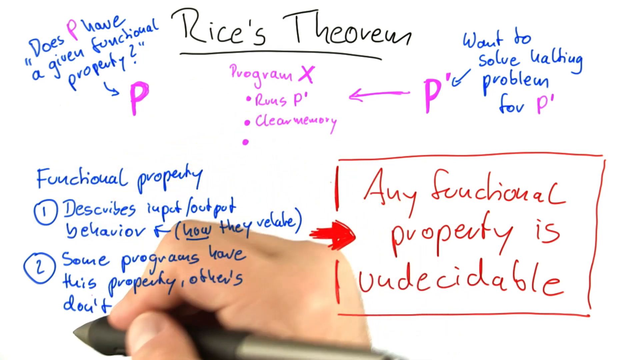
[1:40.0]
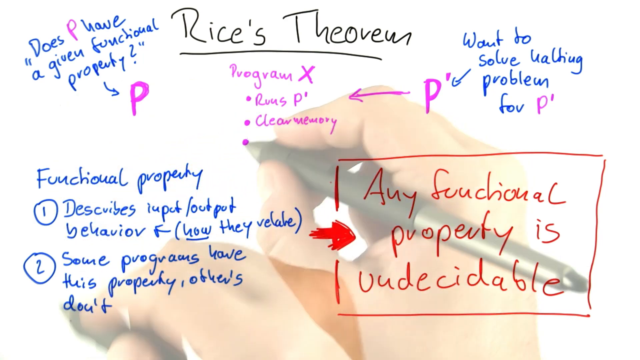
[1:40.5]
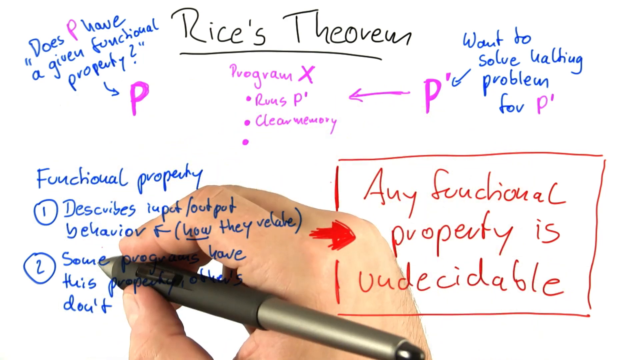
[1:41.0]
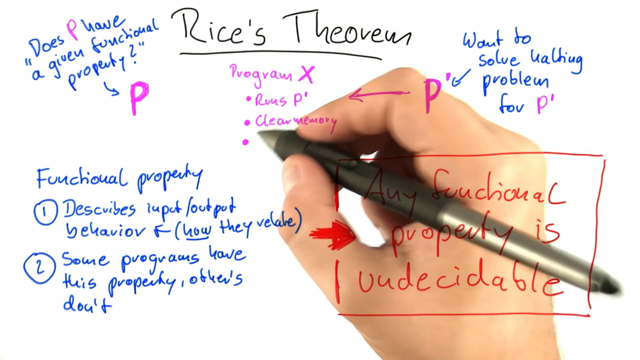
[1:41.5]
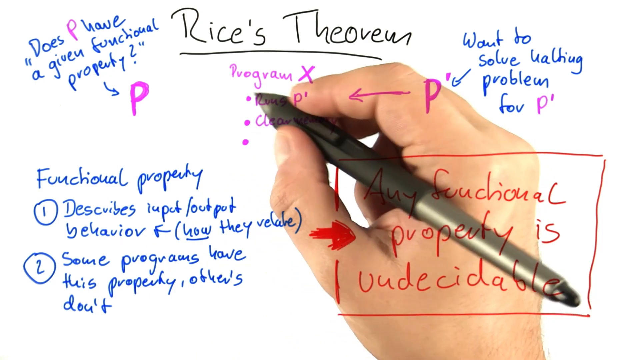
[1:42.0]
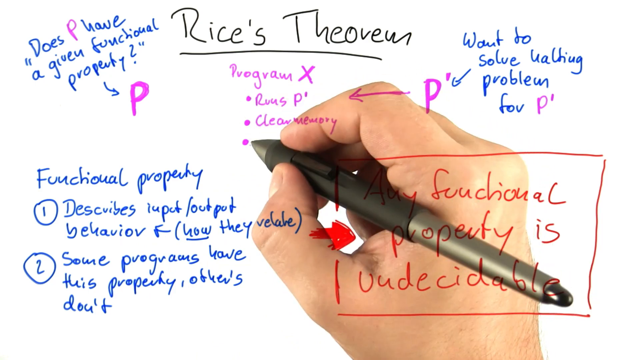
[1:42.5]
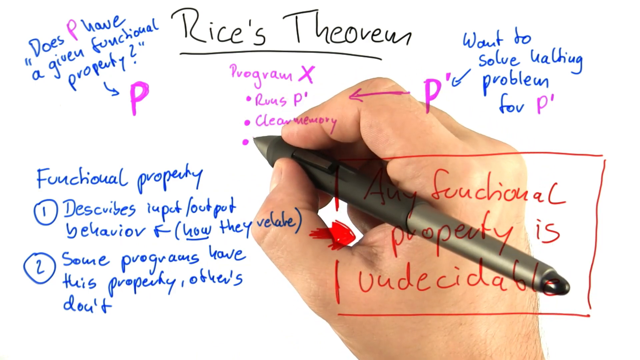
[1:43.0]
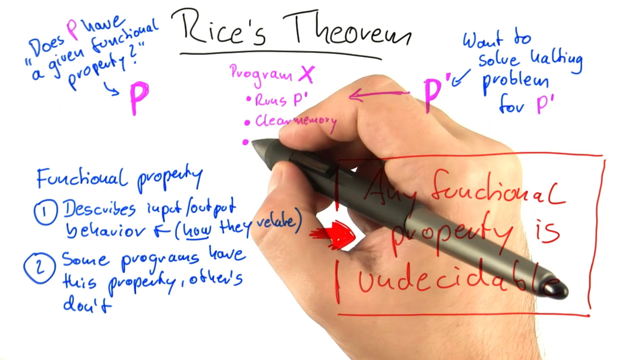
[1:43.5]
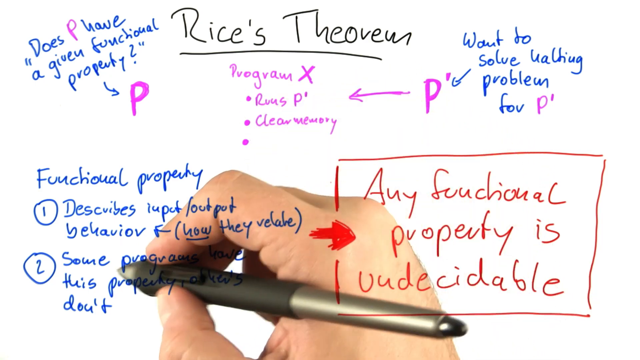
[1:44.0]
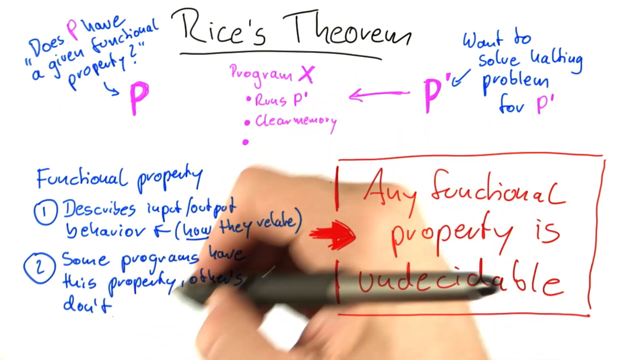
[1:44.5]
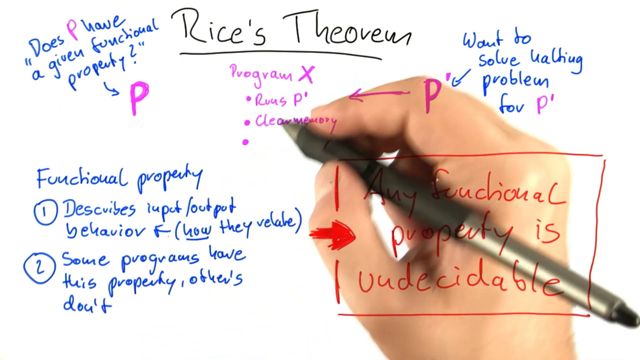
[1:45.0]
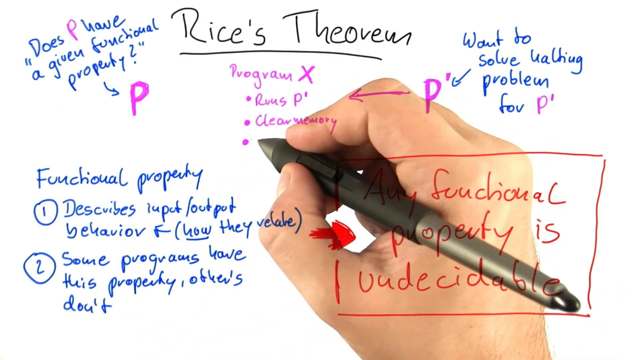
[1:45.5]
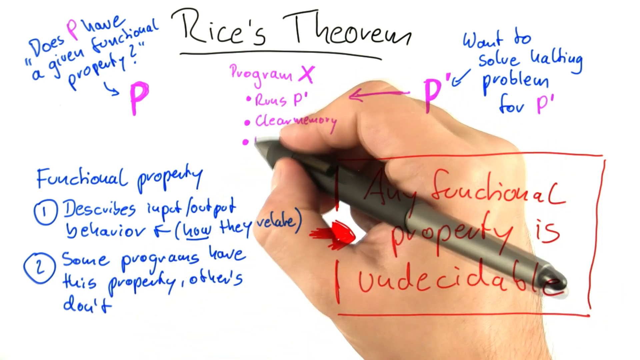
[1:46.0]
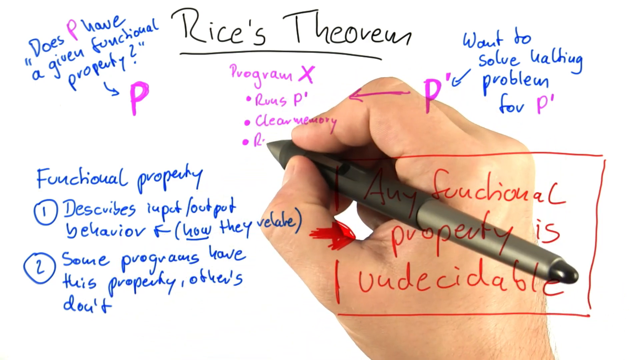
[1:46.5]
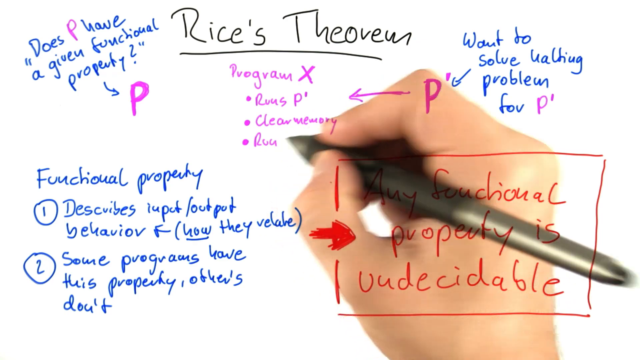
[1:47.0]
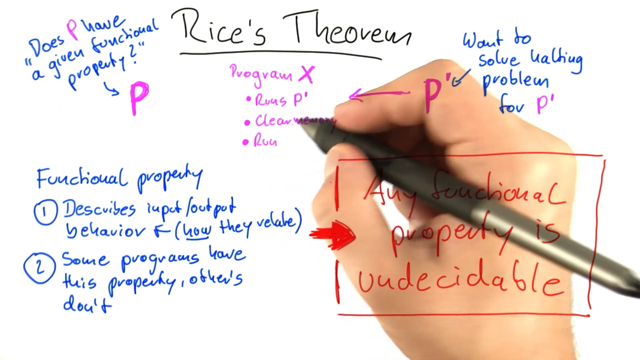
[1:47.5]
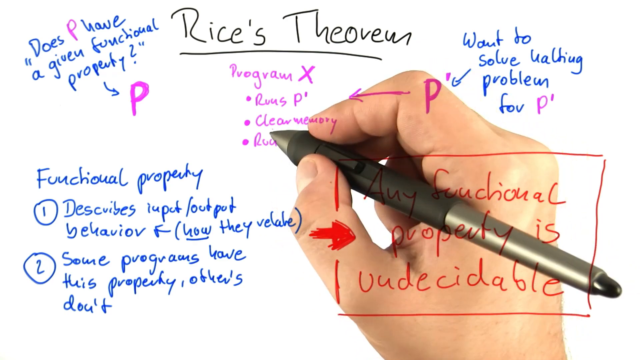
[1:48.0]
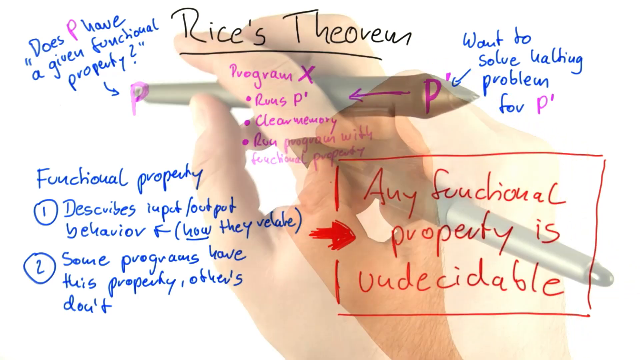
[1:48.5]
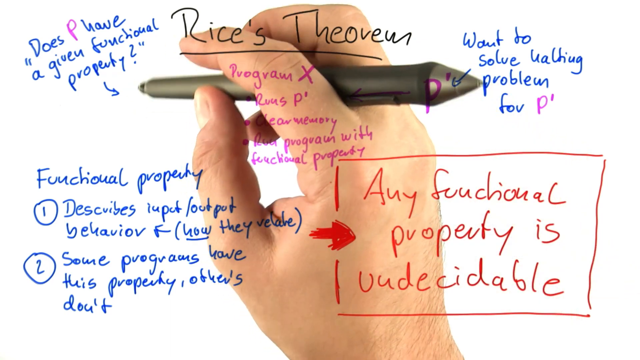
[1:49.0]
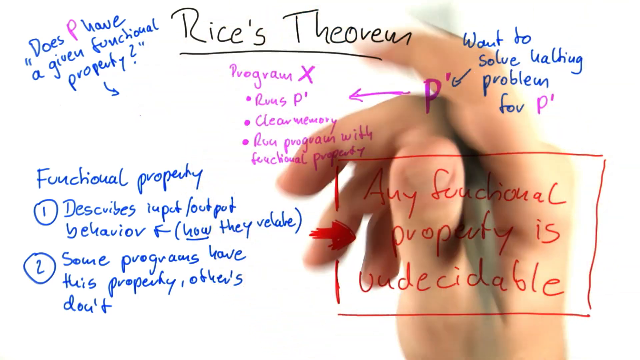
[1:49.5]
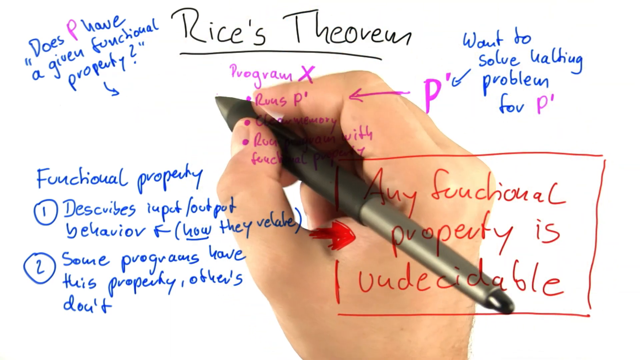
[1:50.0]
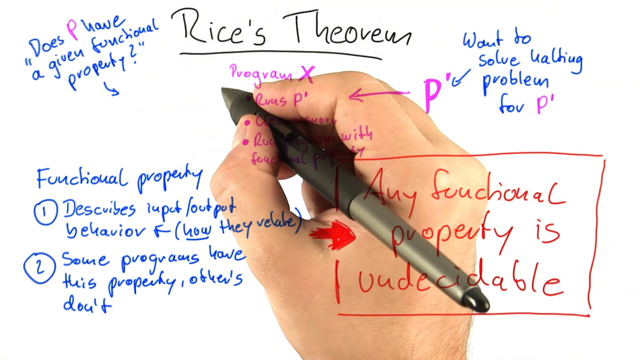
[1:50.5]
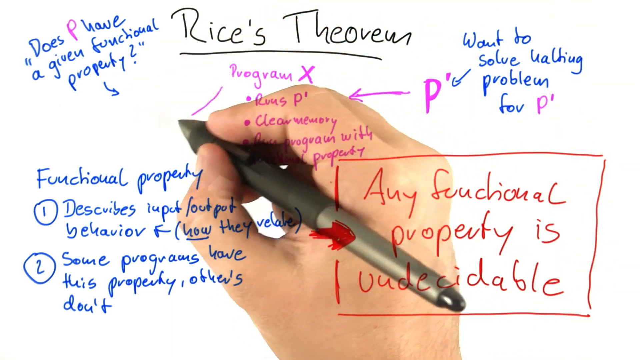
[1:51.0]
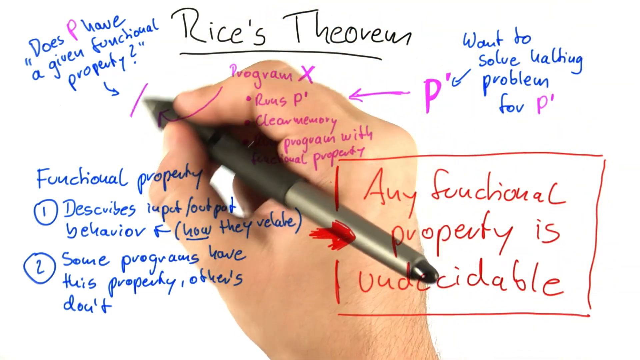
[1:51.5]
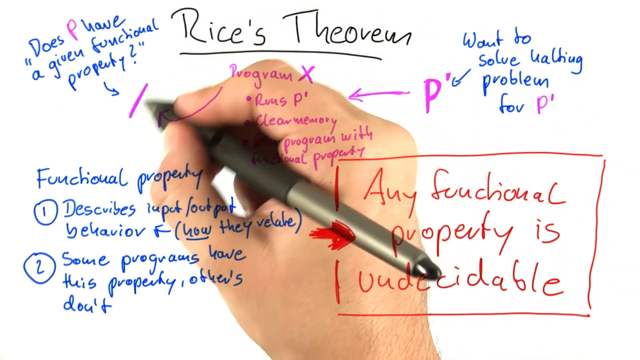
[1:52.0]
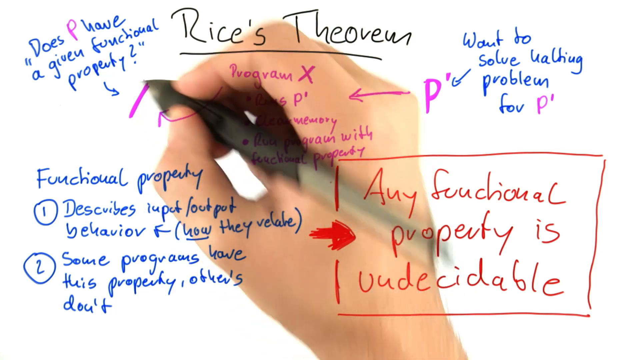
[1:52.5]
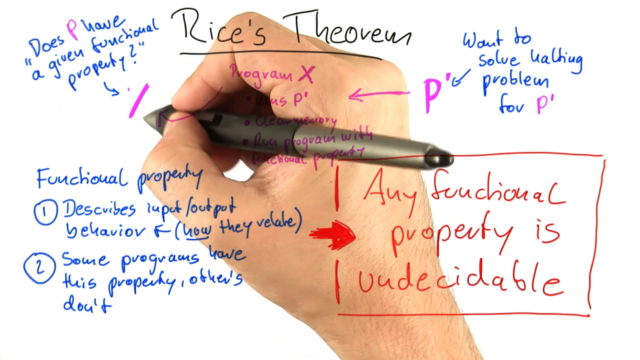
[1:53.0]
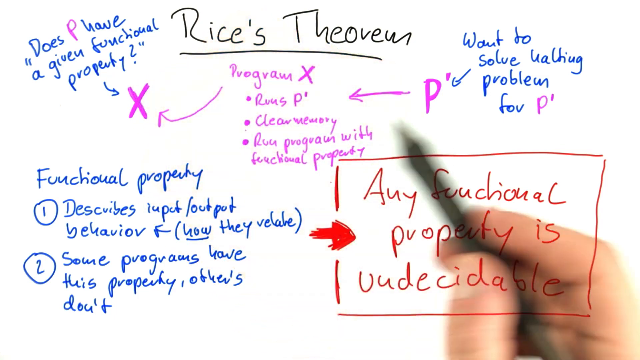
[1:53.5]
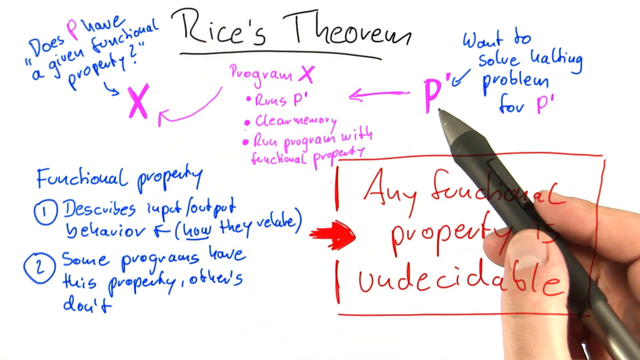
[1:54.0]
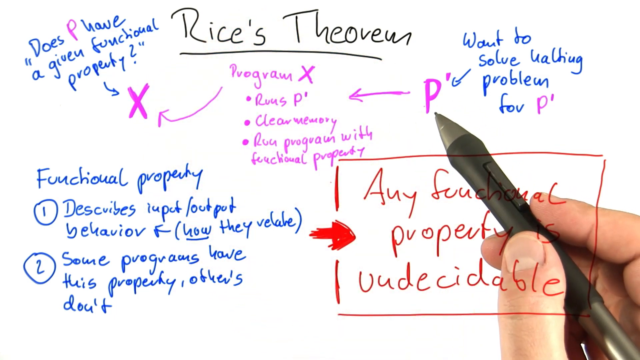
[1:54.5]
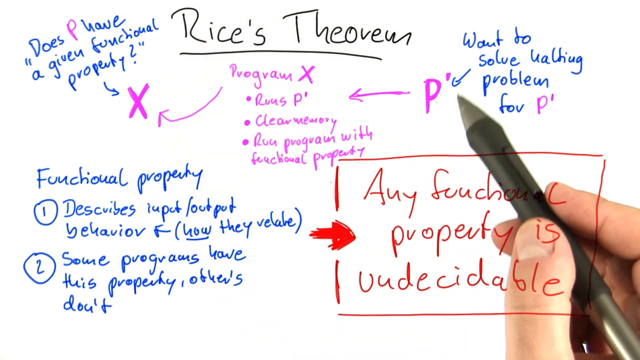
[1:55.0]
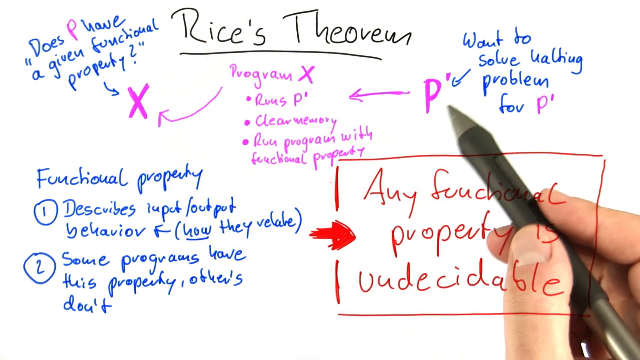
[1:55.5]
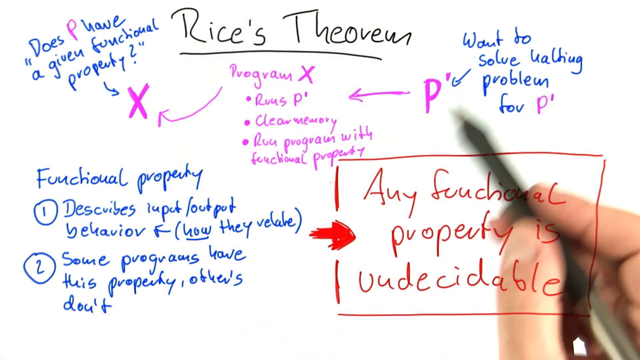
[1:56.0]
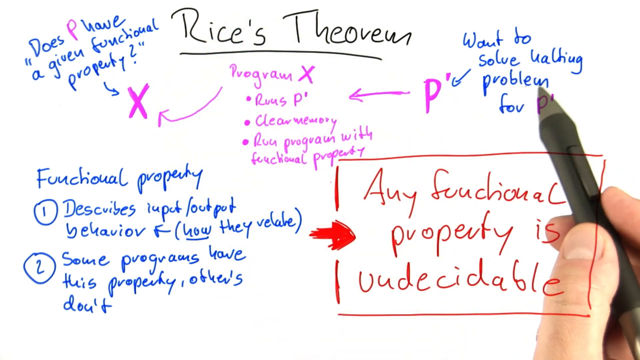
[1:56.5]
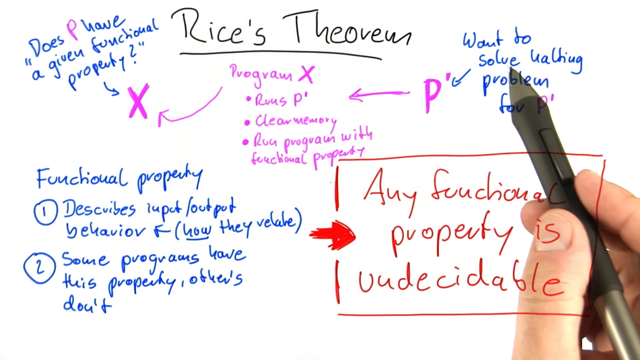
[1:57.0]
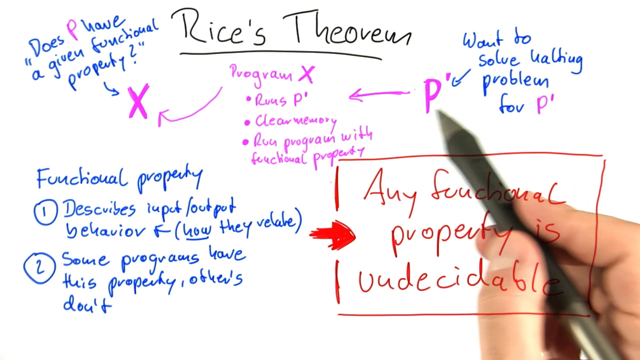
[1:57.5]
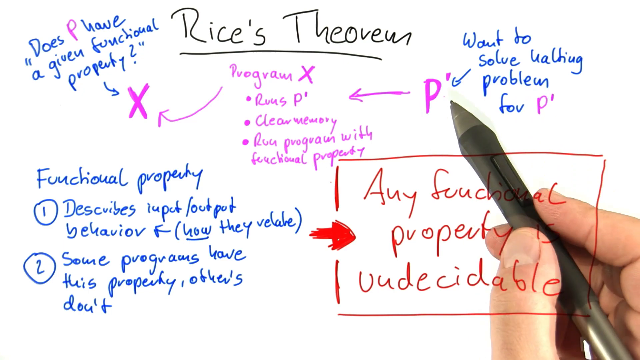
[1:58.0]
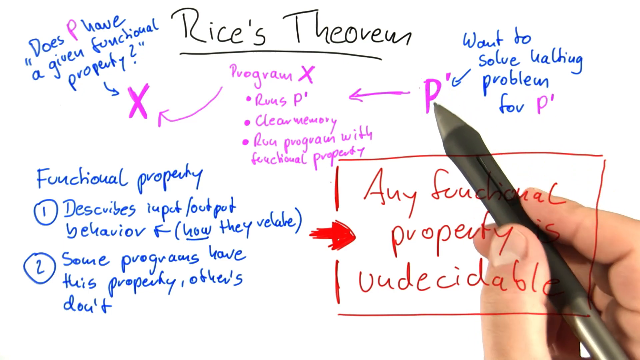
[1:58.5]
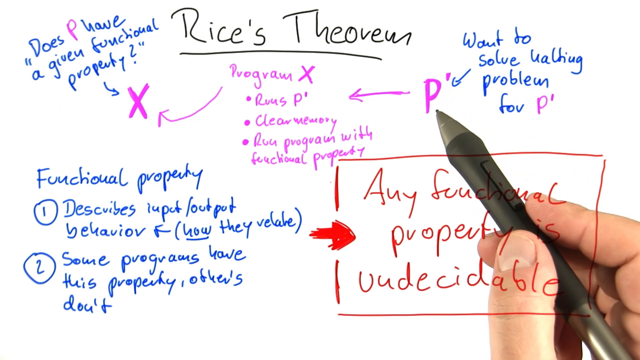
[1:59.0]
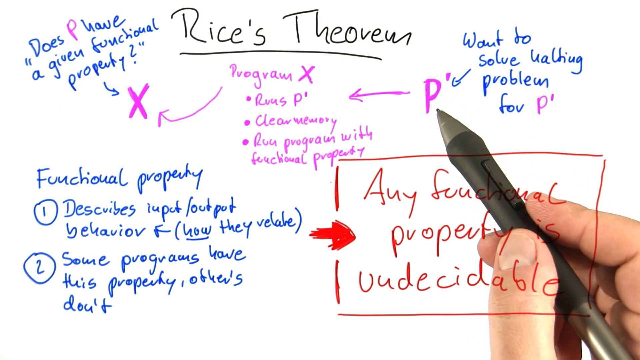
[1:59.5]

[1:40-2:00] Black text at the top of a white background says "Rice's Theorem." On the left, blue and purple text in quotation marks says "this P has a given functional property," with a blue arrow pointing to a purple P. Purple text says "Program X" with bullets that say "Russ P" and "Clear Memory." A purple P has a purple arrow pointing left at that text, and next to it blue text says "Want to Solve Waiting Problem for P" with a blue arrow pointing to that. Blue text in the bottom left corner says "Functional Property 1 describes input output behavior, how they relate. And 2 some programs have this property, others don't." A red outlined box has a red arrow pointing to red text that says "Any Functional Property is Undecidable." A hand with a pen goes up to the purple text where the bullet is and kind of back down to the functional property text, then writes "RUU." Text up here then says "Program with Functional Property." The person erases the purple letter P on the left, draws a purple arrow, scribbles a purple X, and moves the pen over to the P and the blue text that says "Want to Solve Waiting Problem."